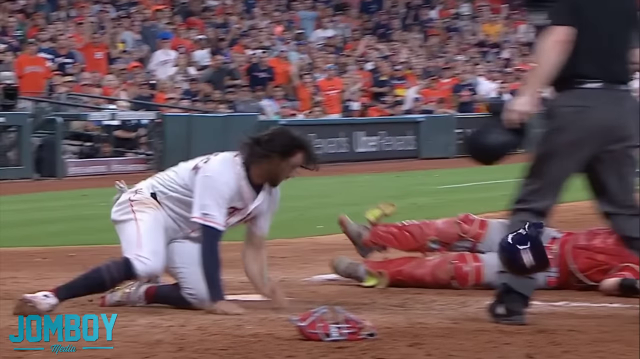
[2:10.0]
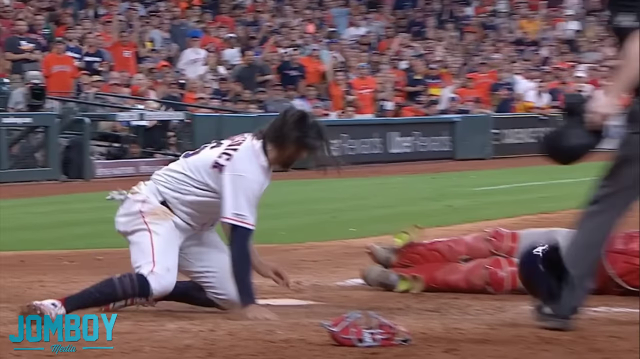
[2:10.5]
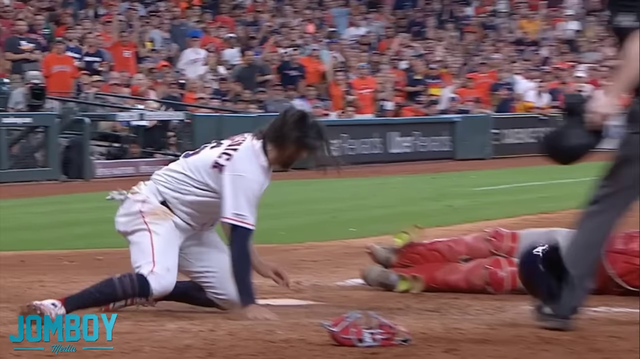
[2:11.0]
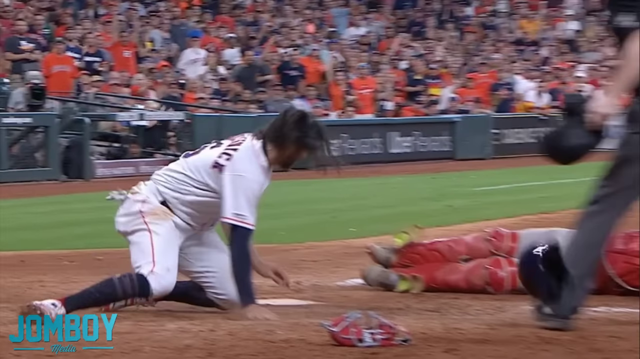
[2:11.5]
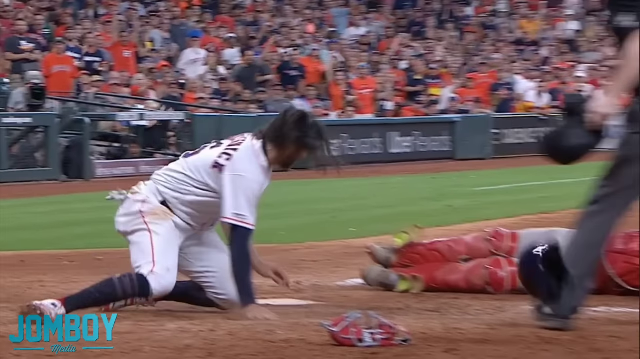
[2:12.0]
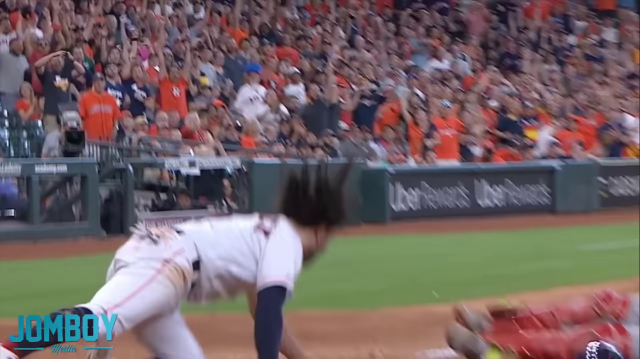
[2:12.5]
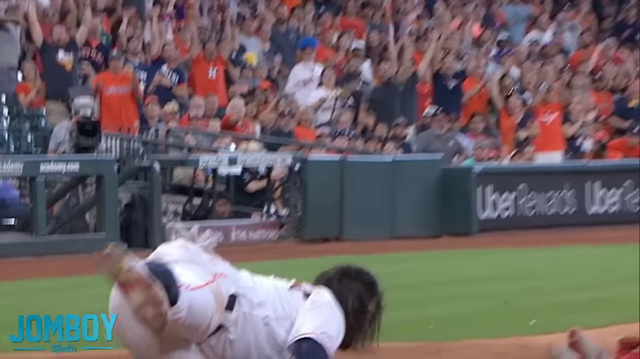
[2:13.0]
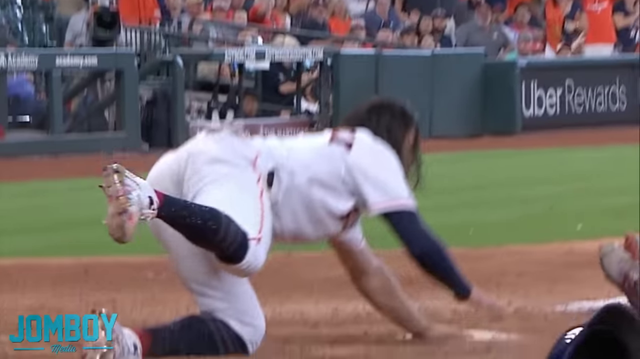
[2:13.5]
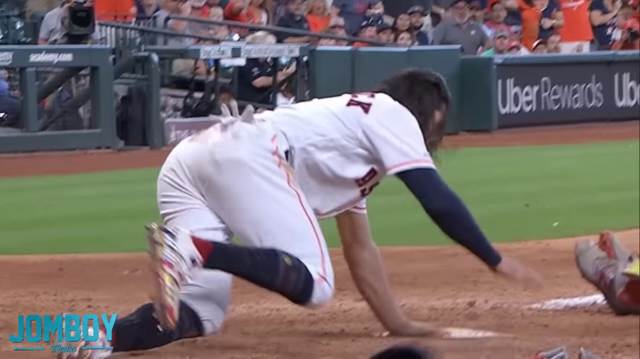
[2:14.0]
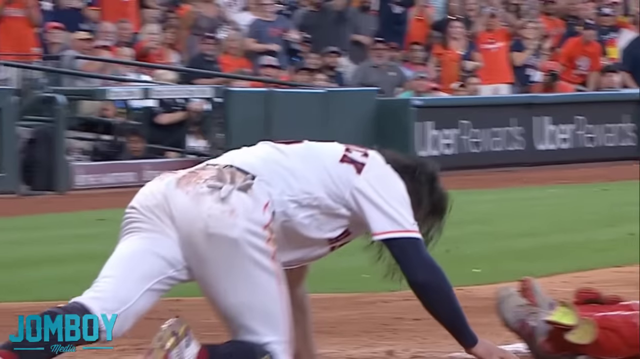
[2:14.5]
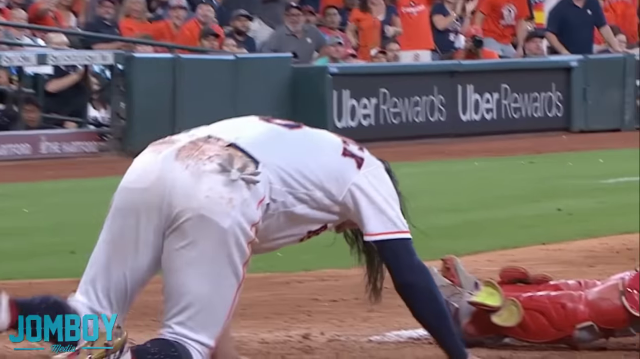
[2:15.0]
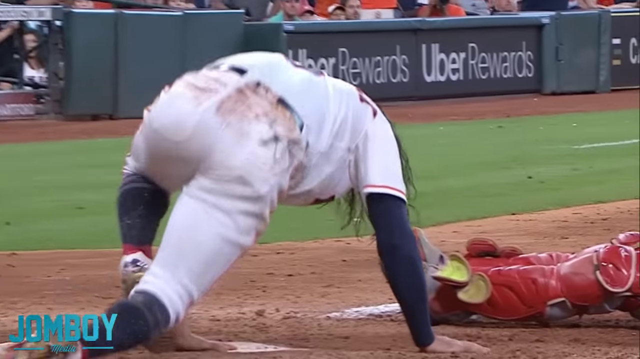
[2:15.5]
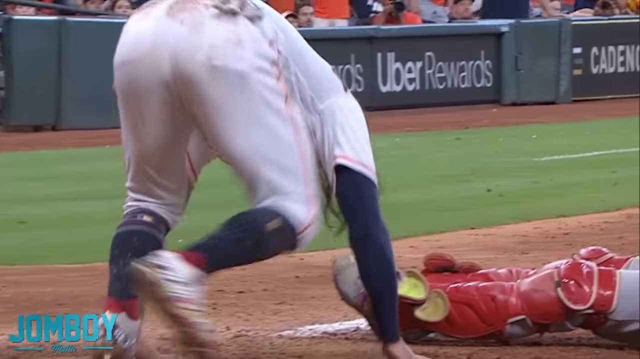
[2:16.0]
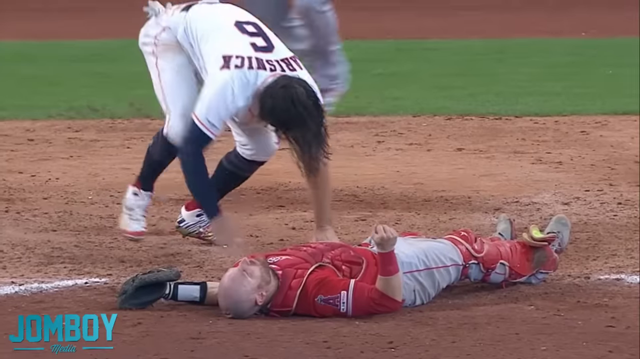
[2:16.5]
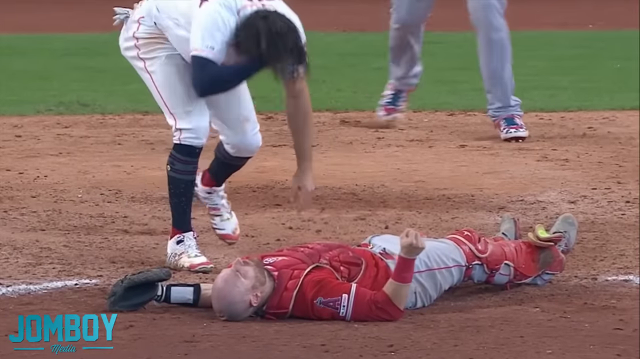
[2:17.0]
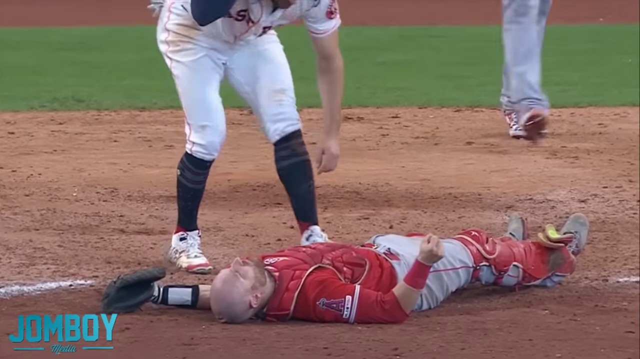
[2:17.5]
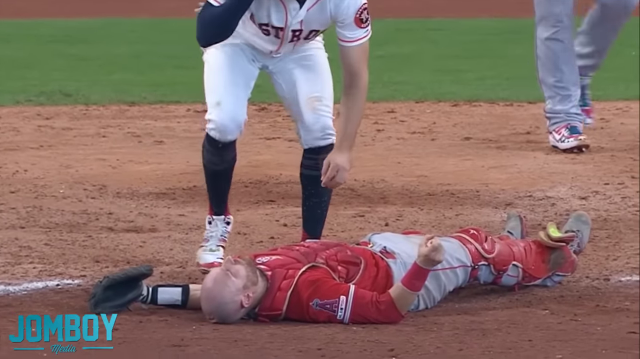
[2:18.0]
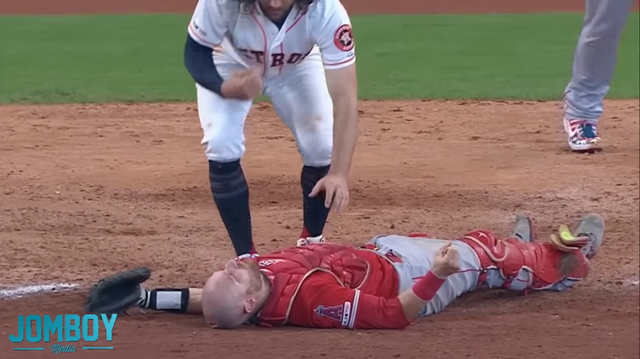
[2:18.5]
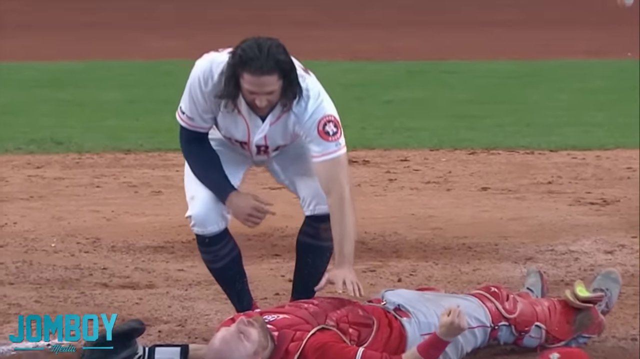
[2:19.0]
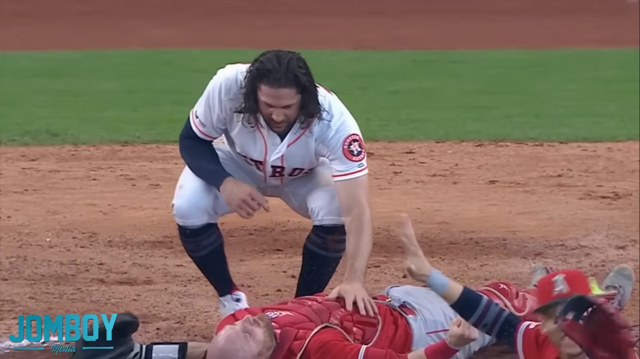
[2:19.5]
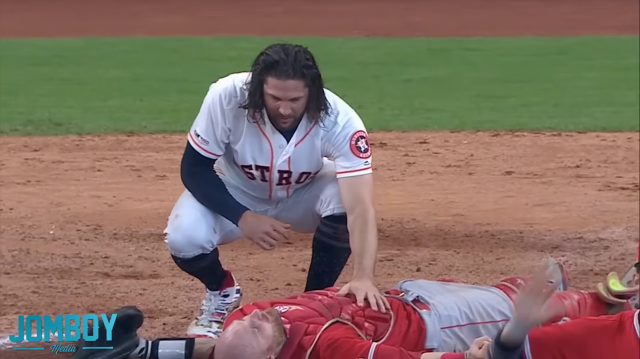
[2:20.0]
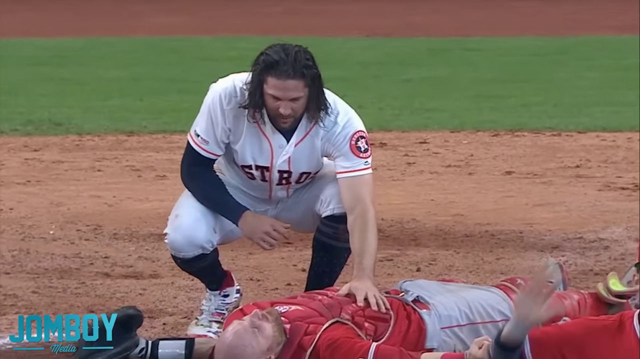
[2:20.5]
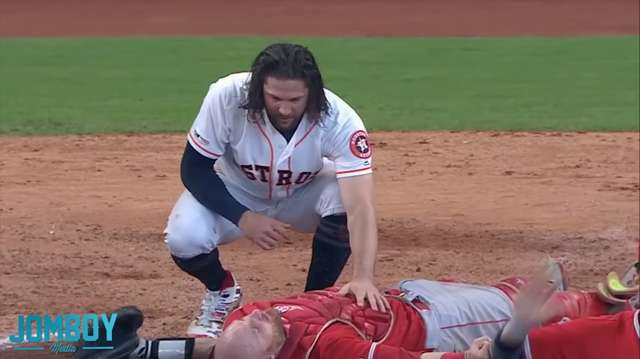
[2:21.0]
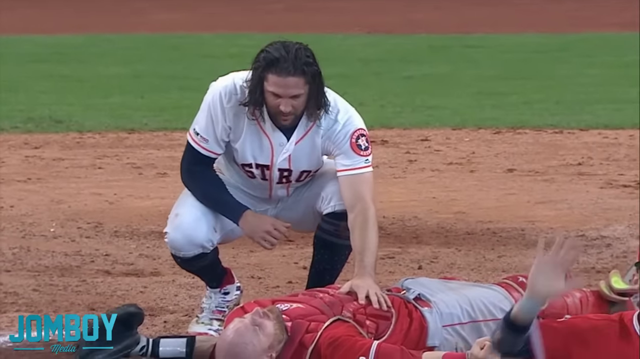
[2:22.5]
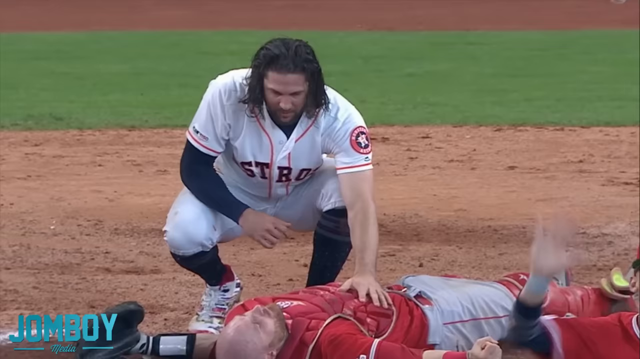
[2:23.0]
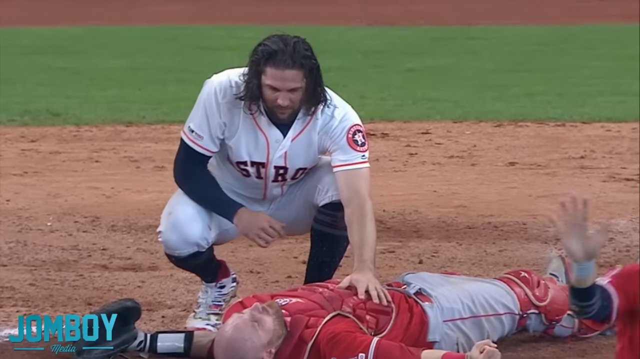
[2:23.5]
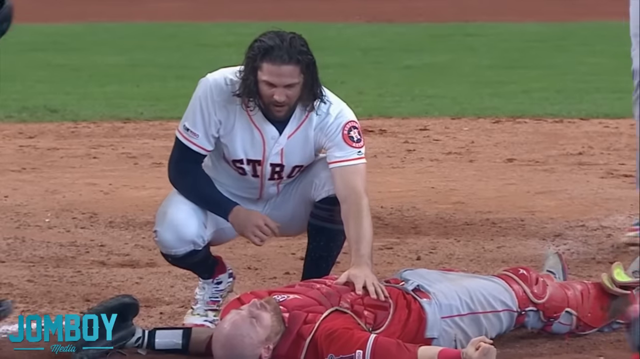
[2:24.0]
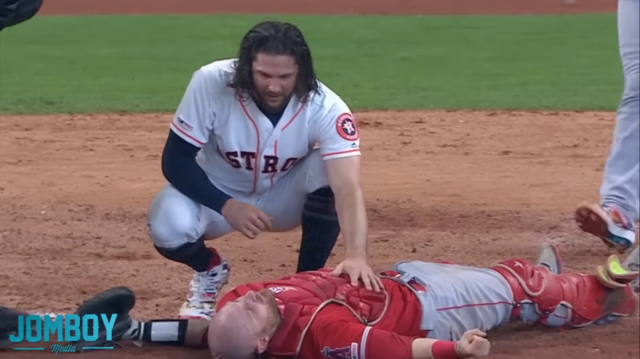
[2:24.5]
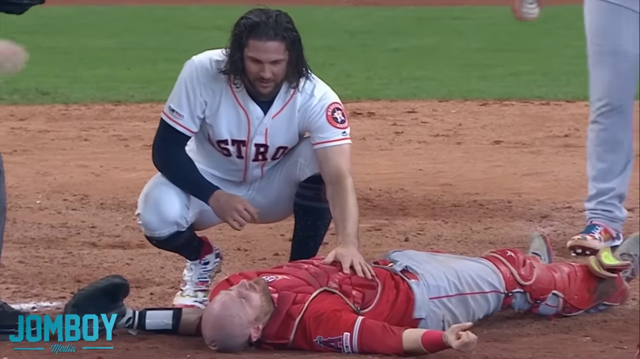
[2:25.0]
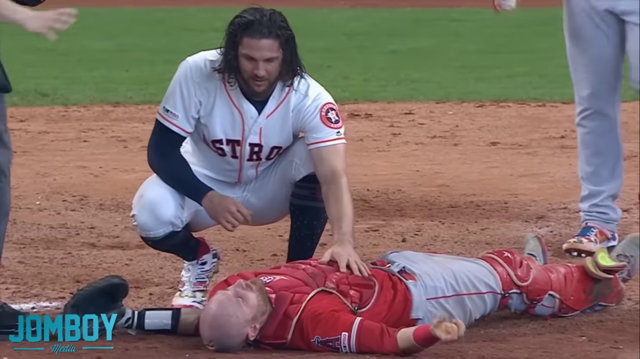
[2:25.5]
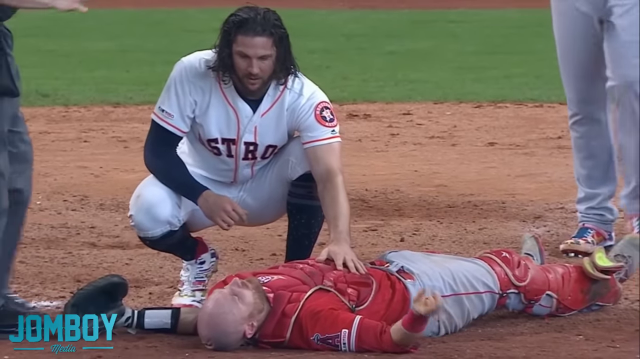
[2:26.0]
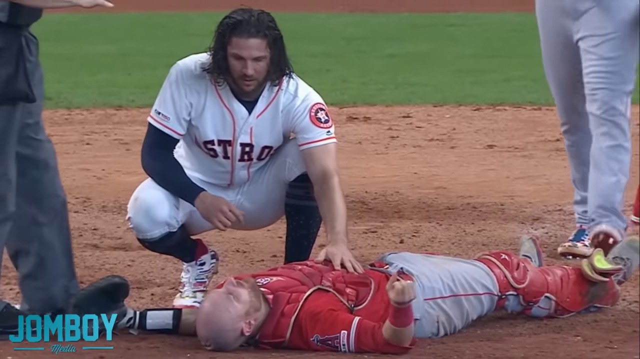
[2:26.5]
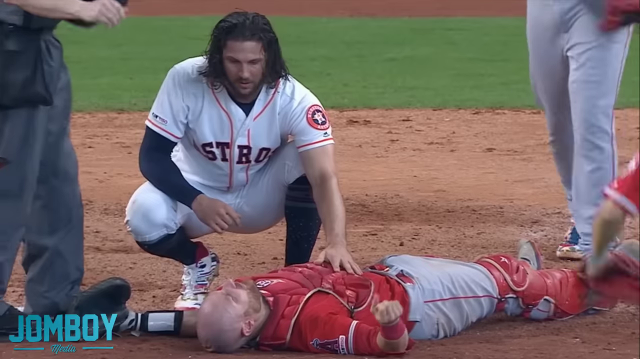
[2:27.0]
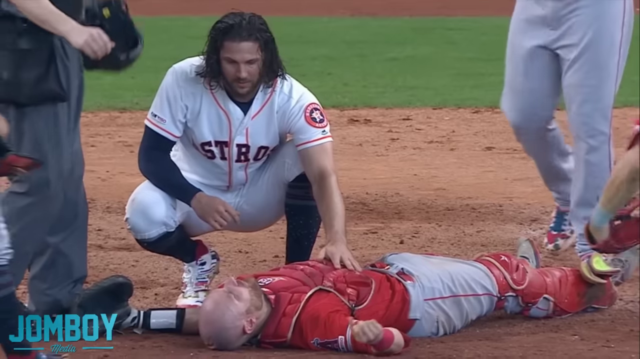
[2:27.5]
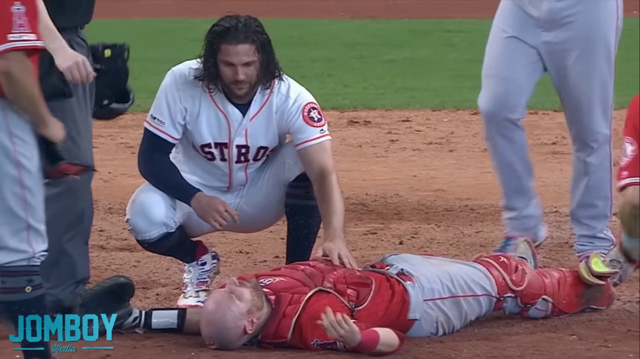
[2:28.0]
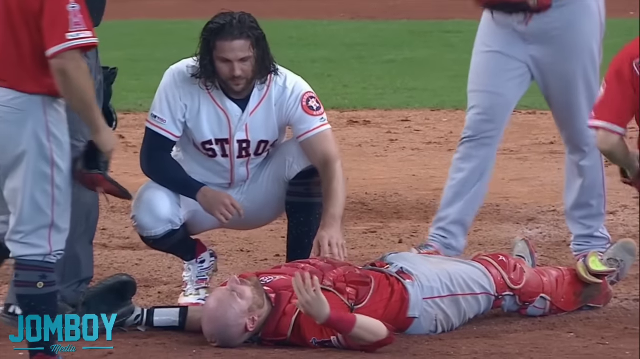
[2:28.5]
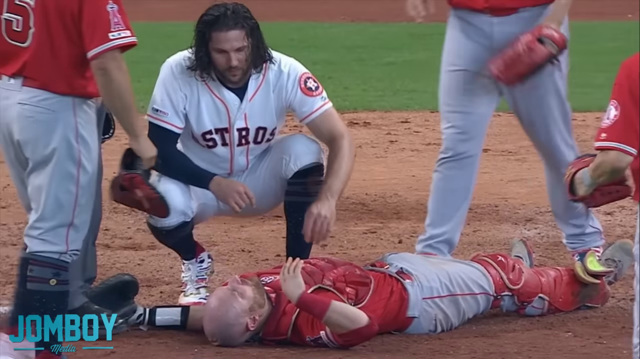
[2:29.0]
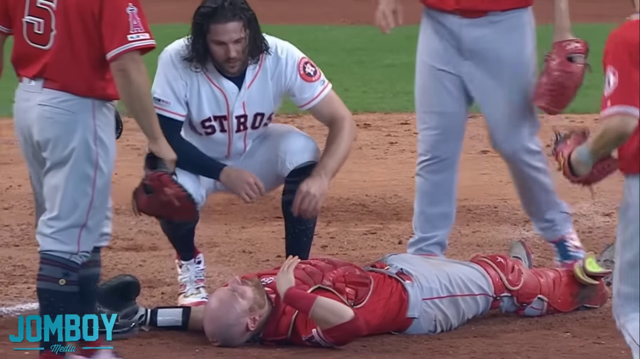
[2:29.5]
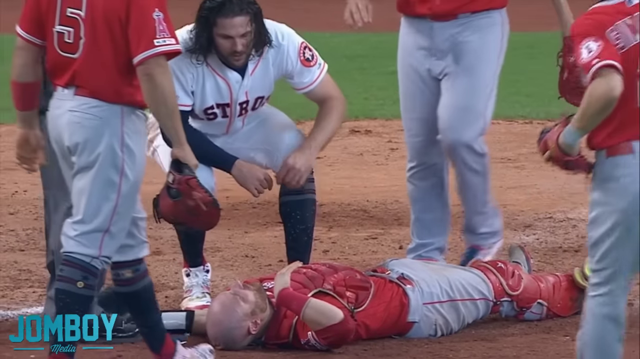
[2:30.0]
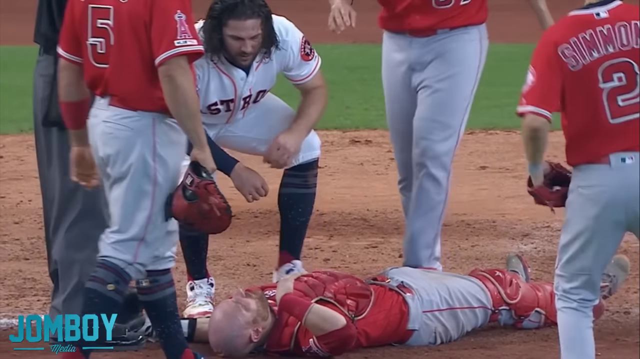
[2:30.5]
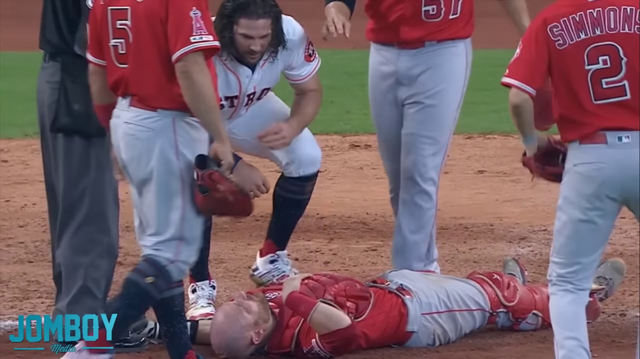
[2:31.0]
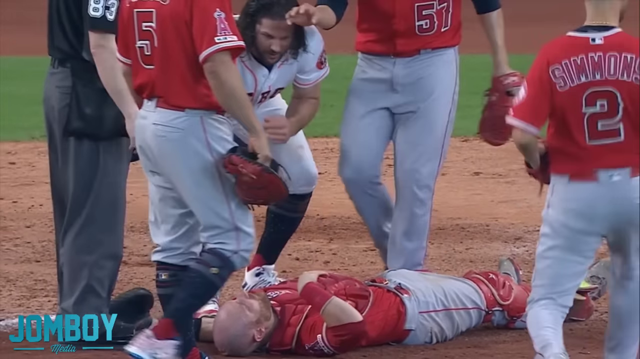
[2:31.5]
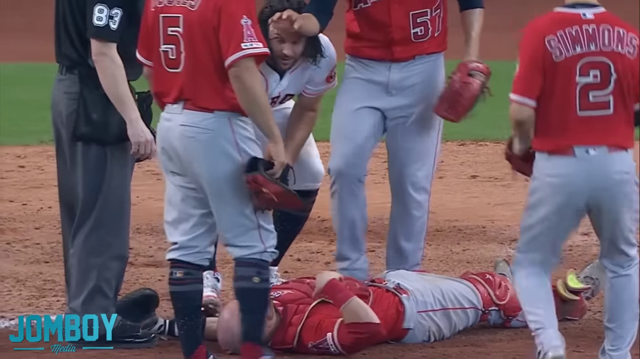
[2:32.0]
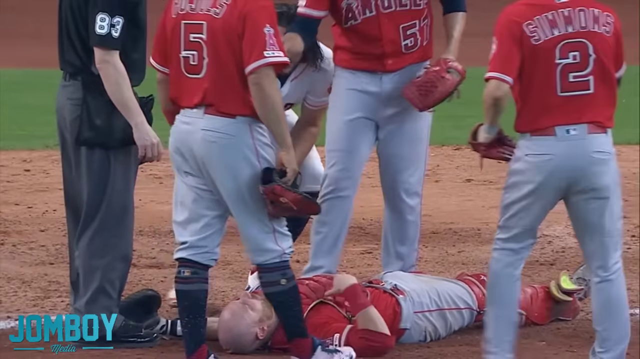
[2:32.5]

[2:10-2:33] Many people jump up in shock and look concerned about the player. He lies on the field, lifting his bent right arm a little; that is the only movement visible. Later, in the back of the cart, he sits up, touches his face and moves around more.